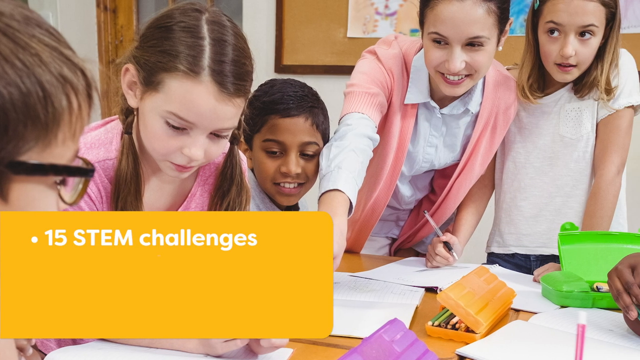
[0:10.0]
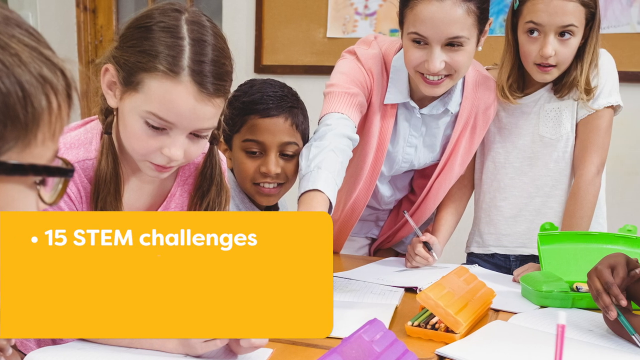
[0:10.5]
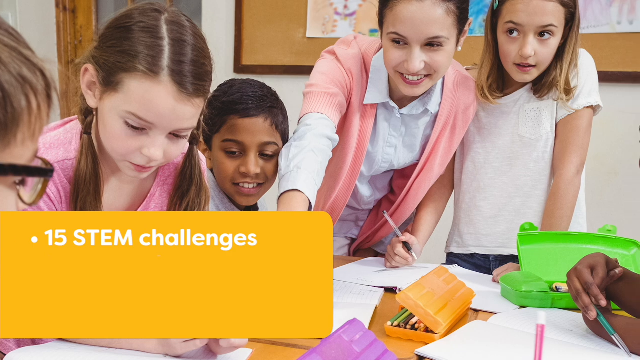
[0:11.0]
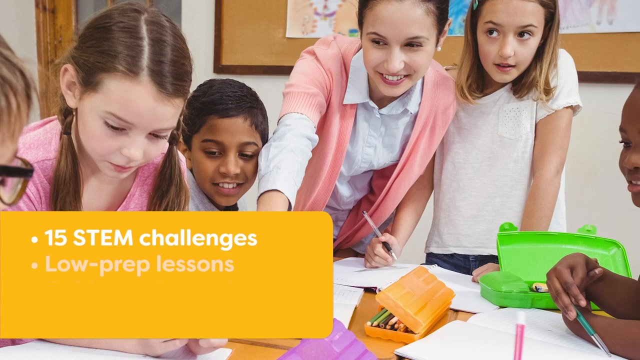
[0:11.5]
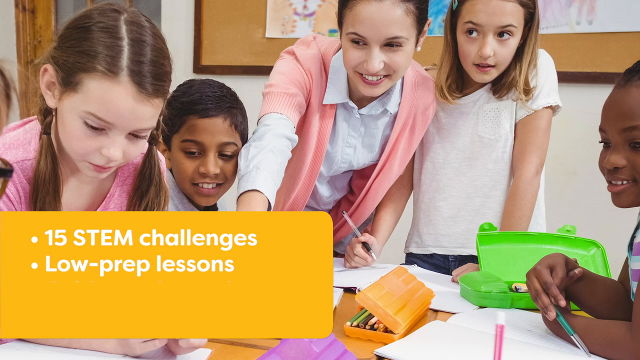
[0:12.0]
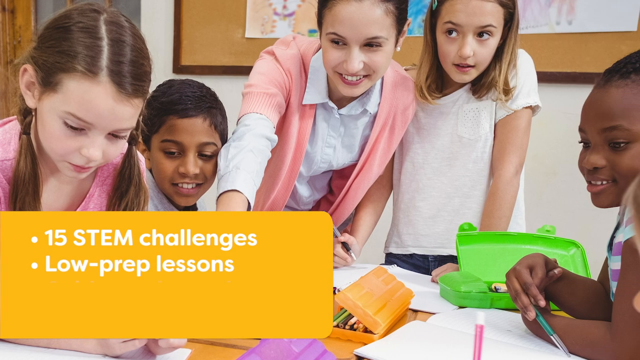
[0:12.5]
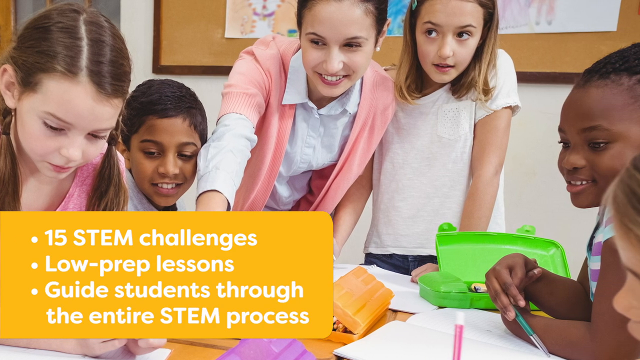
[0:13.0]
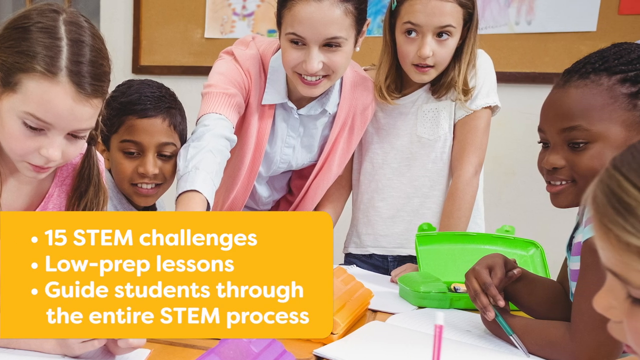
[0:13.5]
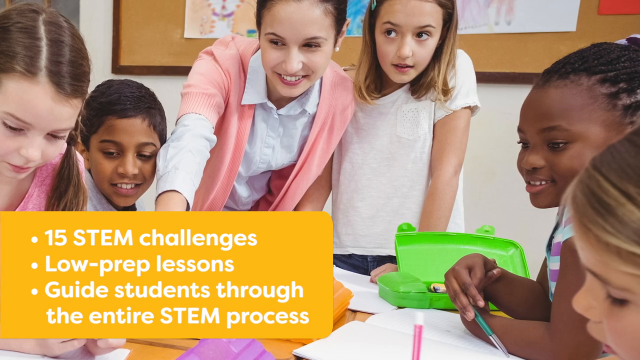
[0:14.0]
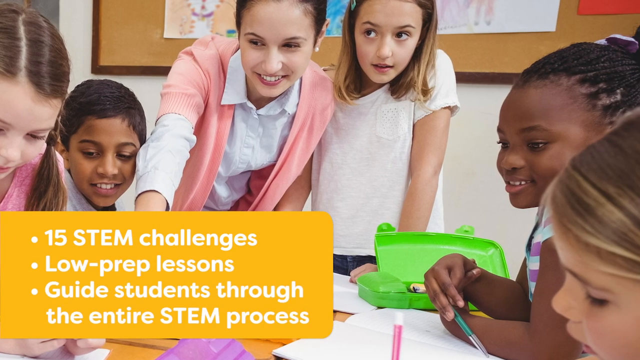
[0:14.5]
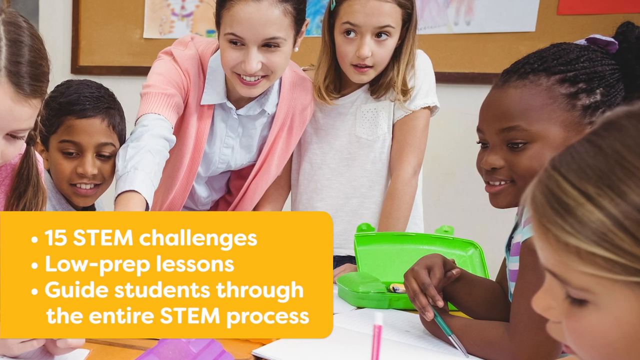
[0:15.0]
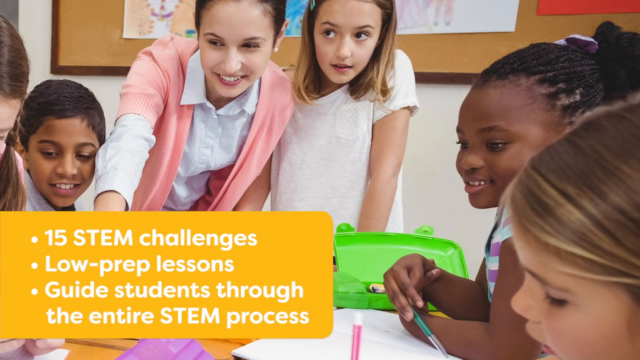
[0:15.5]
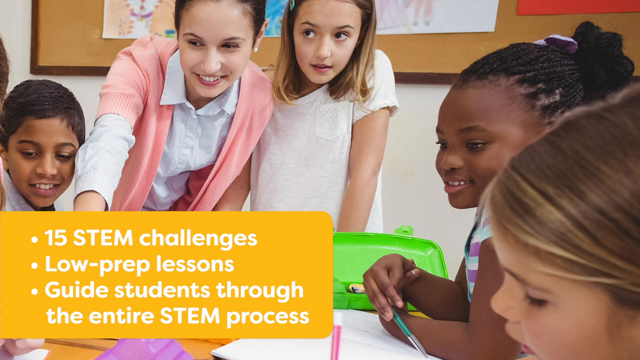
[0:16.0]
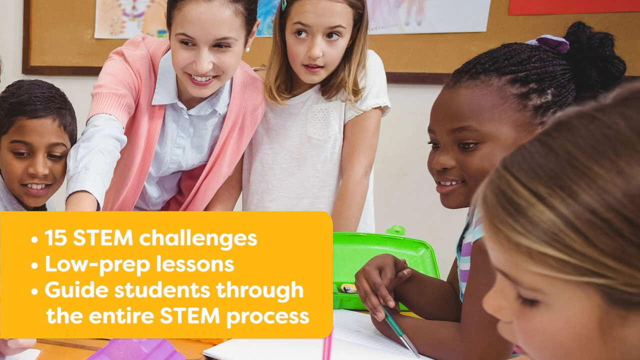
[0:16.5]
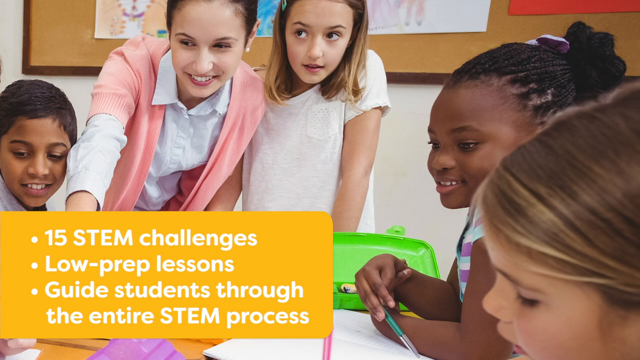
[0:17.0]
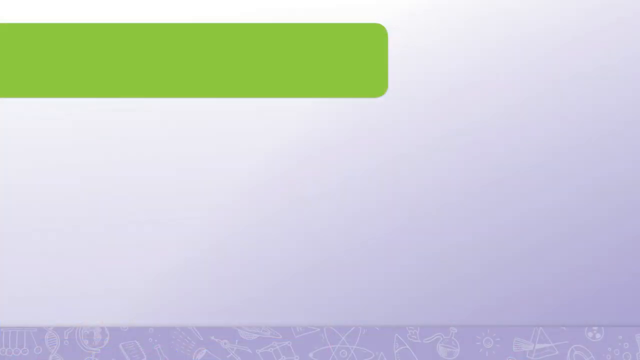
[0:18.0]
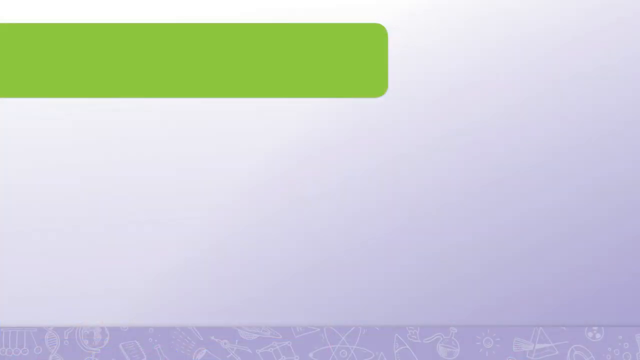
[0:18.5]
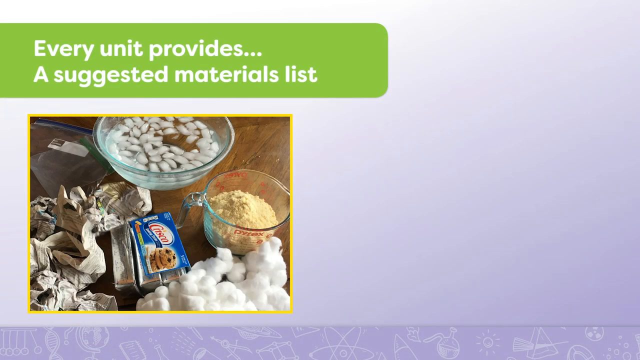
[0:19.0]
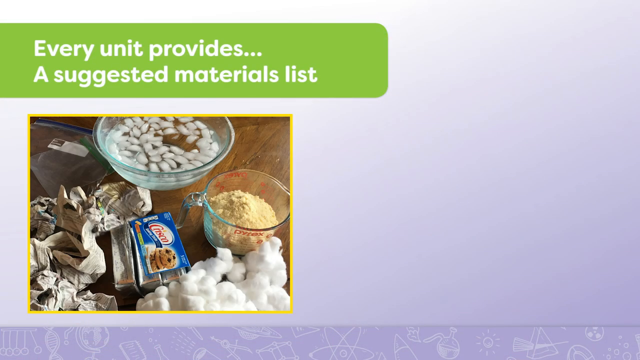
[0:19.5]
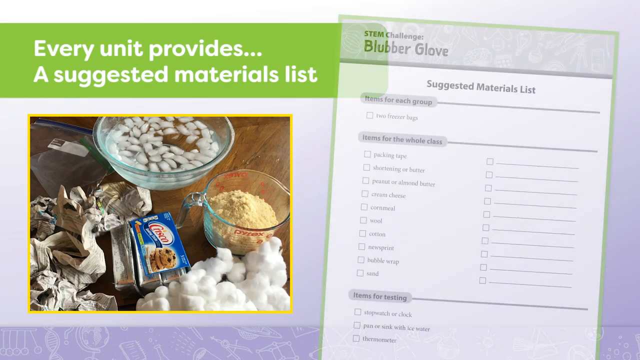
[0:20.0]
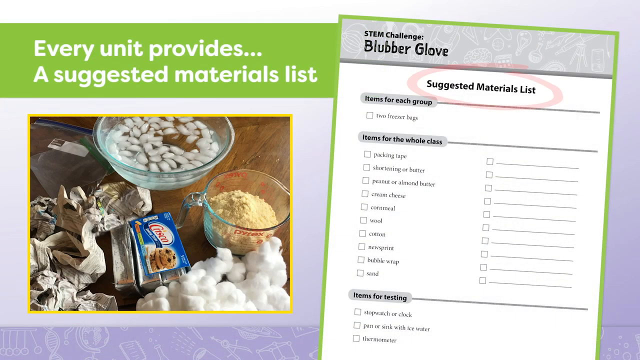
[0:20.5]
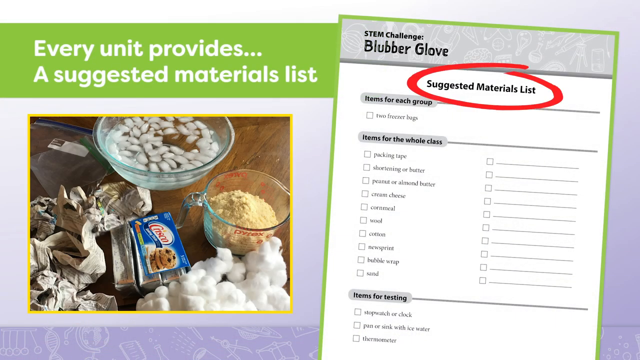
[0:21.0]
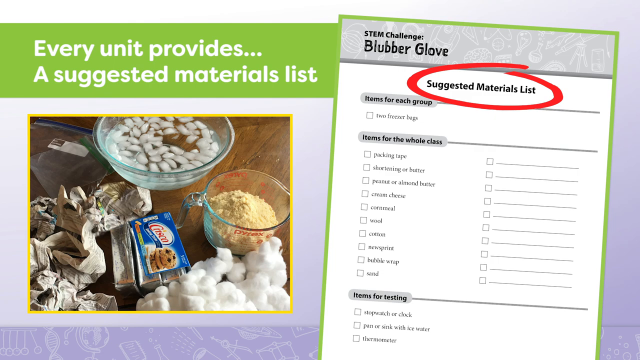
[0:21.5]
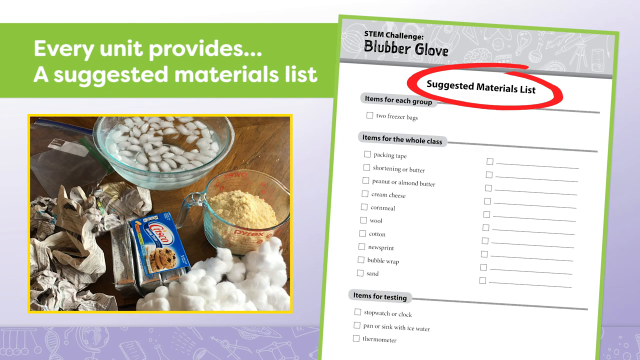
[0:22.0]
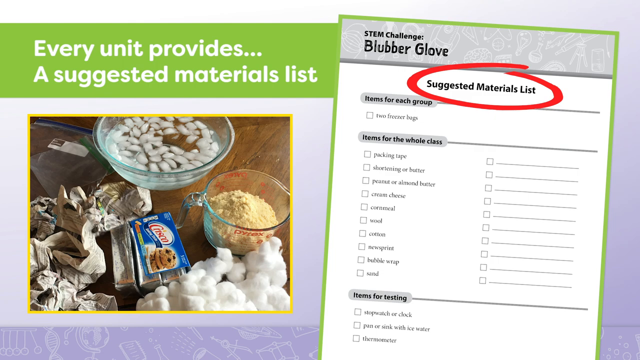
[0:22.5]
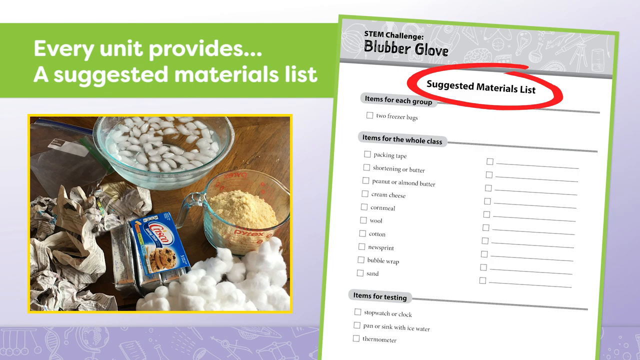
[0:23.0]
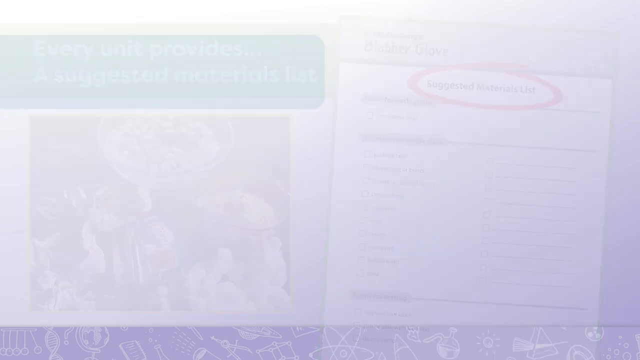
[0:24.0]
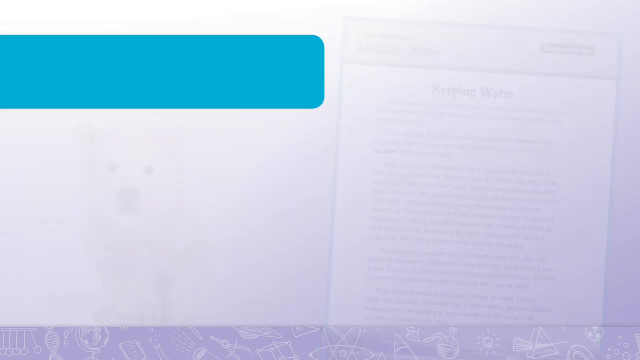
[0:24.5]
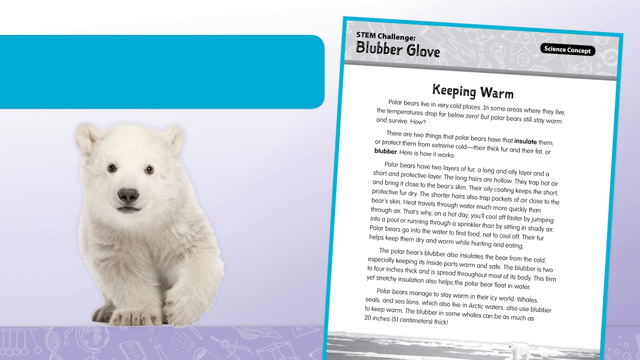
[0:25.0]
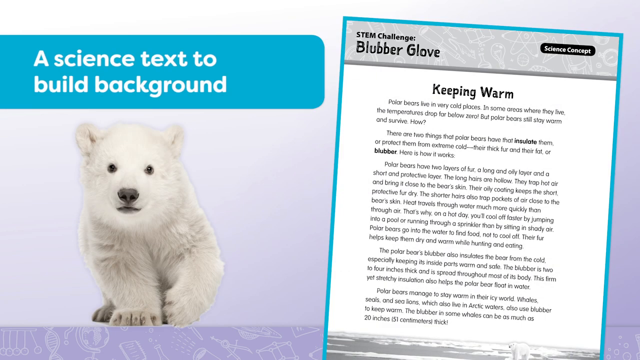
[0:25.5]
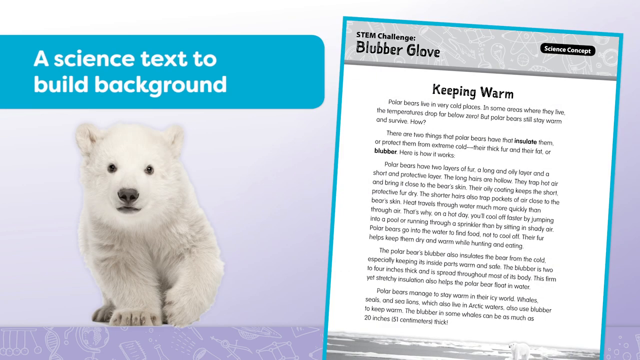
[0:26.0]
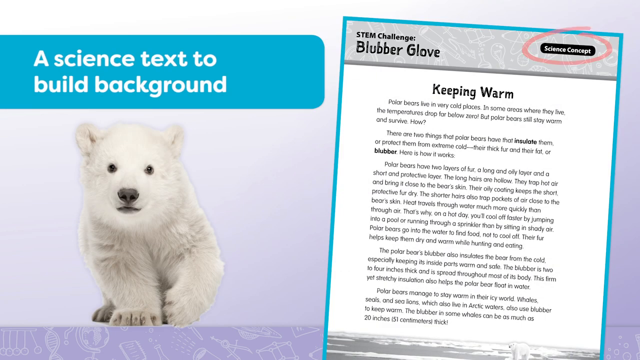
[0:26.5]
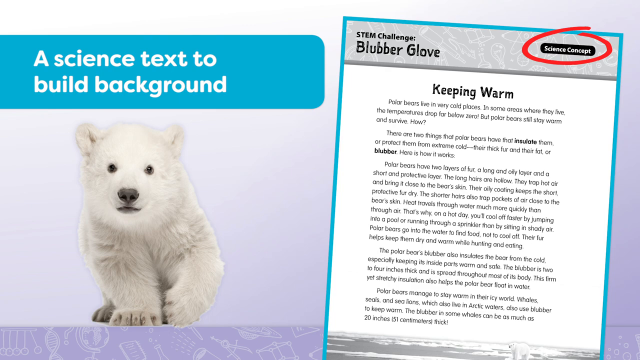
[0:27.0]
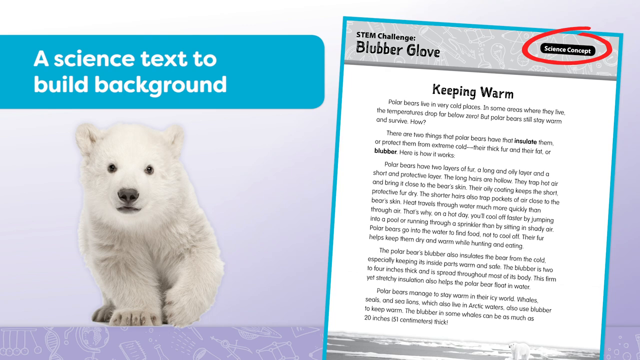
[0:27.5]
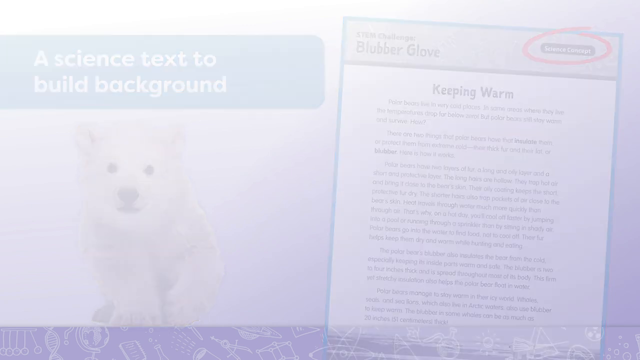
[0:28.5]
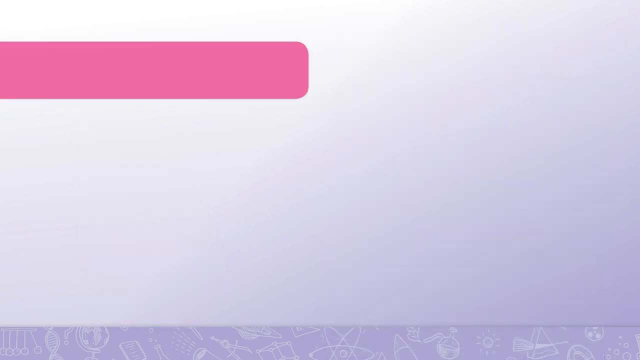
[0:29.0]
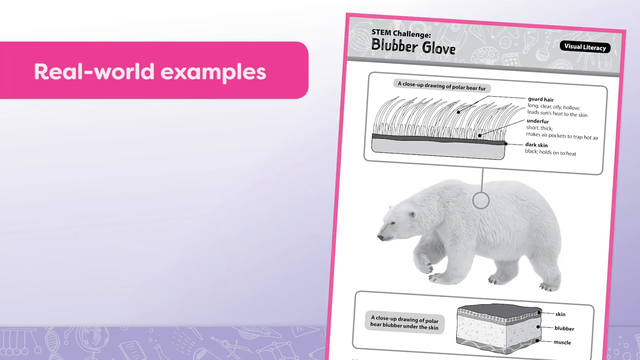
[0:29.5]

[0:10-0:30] A picture of children, kind of in a learning environment, fills the main rectangle. At the lower left, the orange rectangle holds white text with bullets: "15 STEM challenges", "low-prep lessons" and "guides students through the entire STEM process". The next slide has a white, greyish background; in the top left a green rectangle reads in white font "every unit provides...", with "a suggested material list" on the next line. A yellow rectangle is filled with a picture of what looks to be a busy collection of kitchen materials for cooking, playing with food and learning to make cookies, on a wooden countertop or tabletop. On the right is a checklist titled "STEM Challenge Blubber Glove" with "suggested material list" circled by a red marker-like line, and items listed with checkbox squares: "items for each group", "item for the whole class" and "items for testing". The next slide shows the same checklist on the right with "science concept" circled, and a dog on the left side. Another "STEM Challenge Blubber Glove" checklist follows on the right, with a library and "real-world examples".